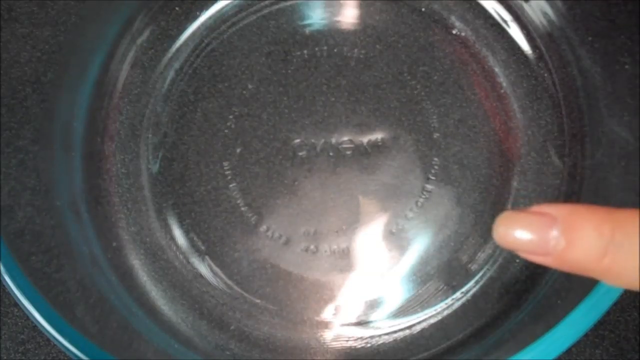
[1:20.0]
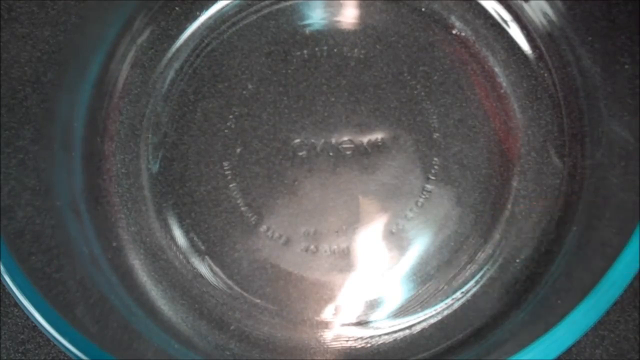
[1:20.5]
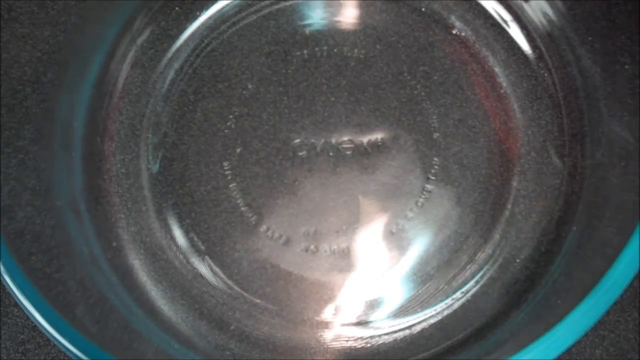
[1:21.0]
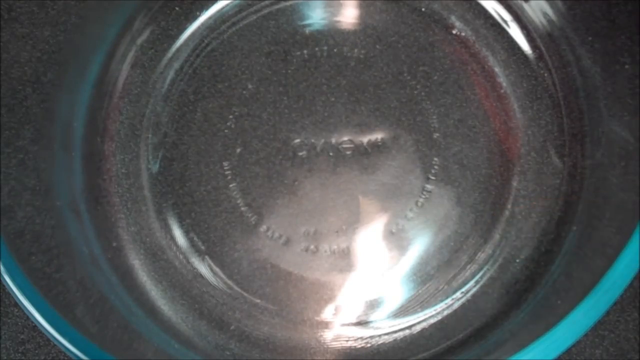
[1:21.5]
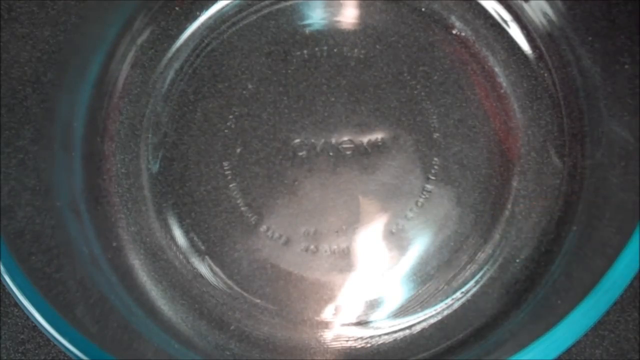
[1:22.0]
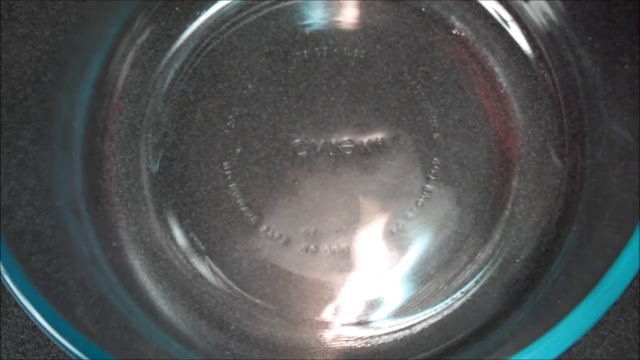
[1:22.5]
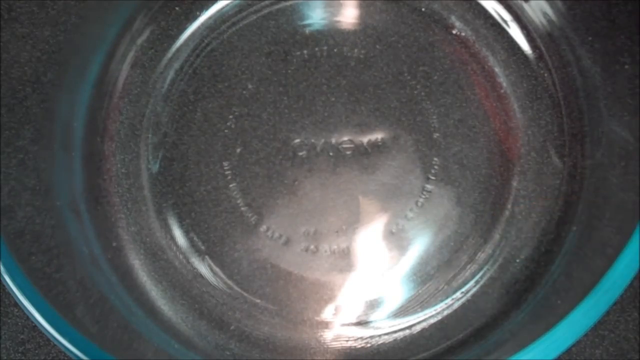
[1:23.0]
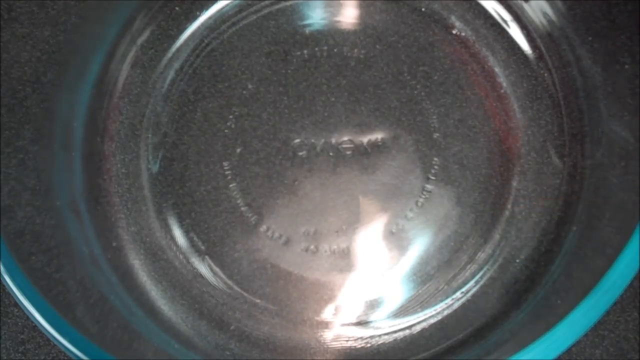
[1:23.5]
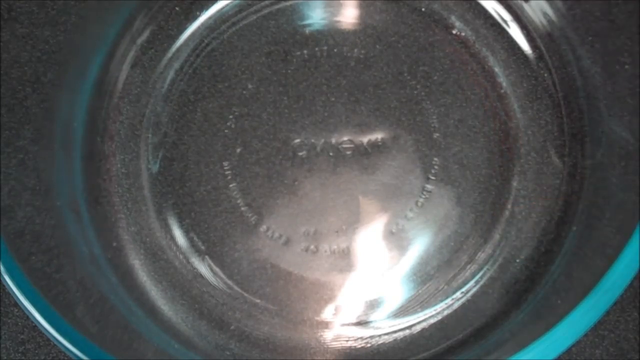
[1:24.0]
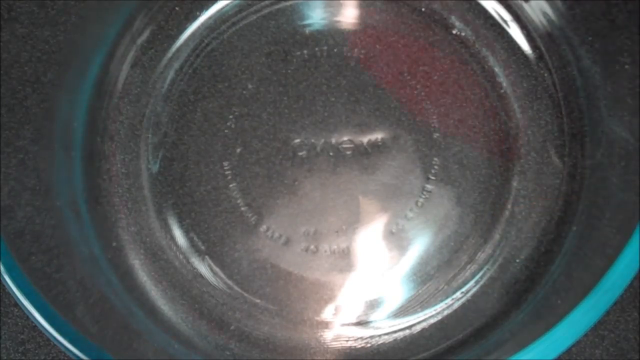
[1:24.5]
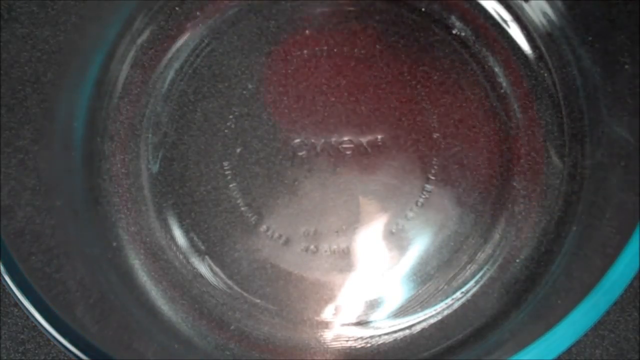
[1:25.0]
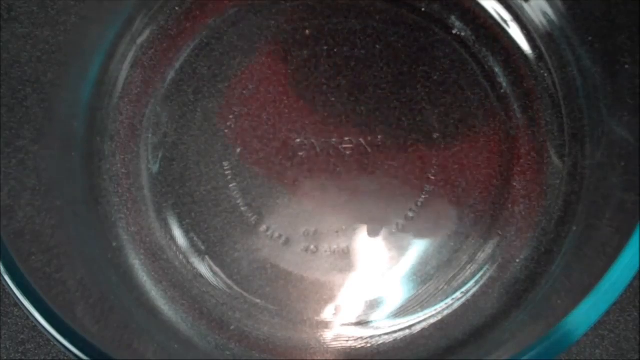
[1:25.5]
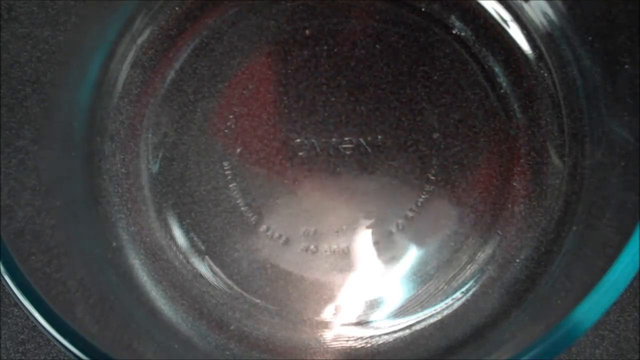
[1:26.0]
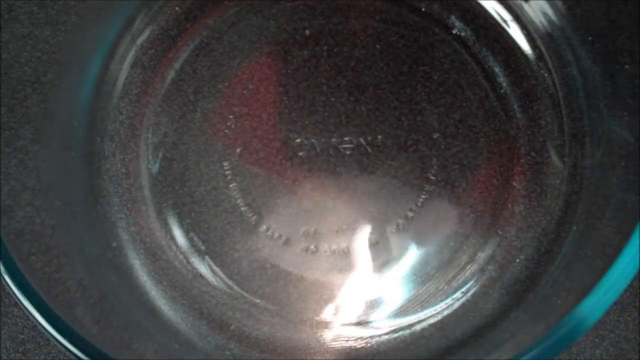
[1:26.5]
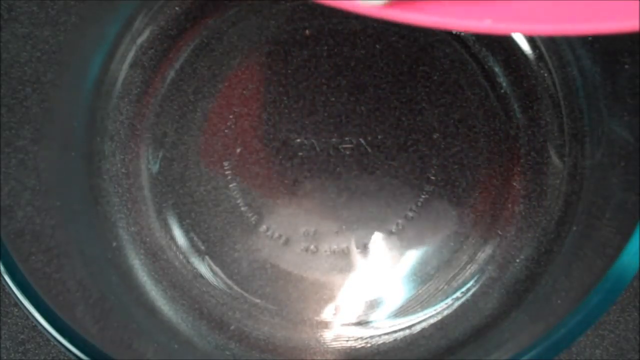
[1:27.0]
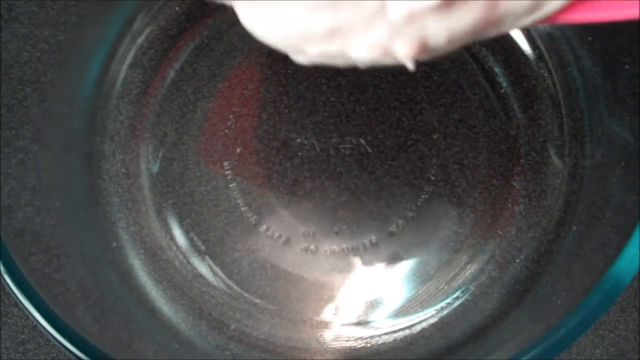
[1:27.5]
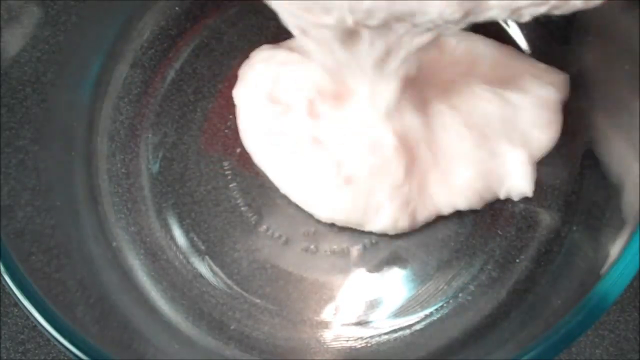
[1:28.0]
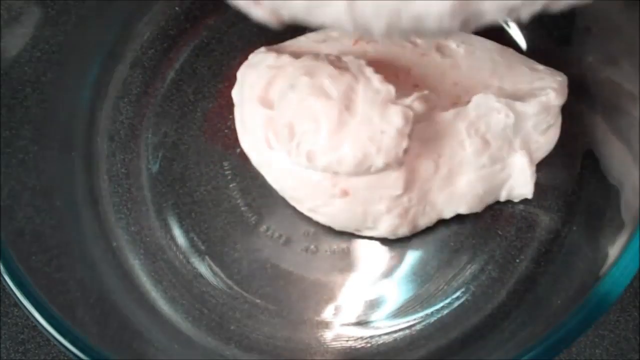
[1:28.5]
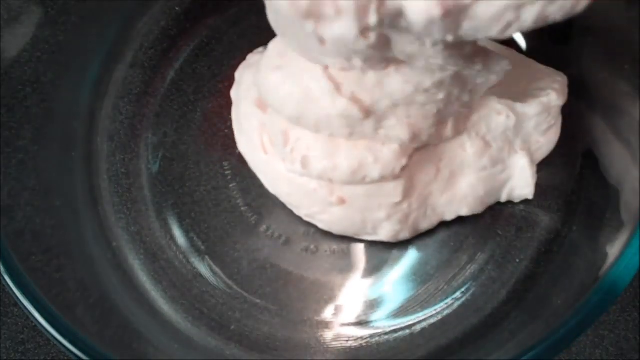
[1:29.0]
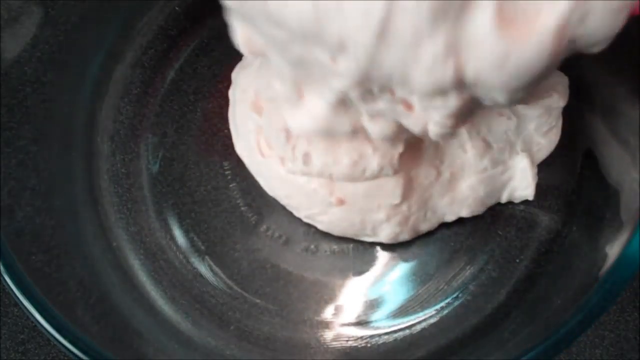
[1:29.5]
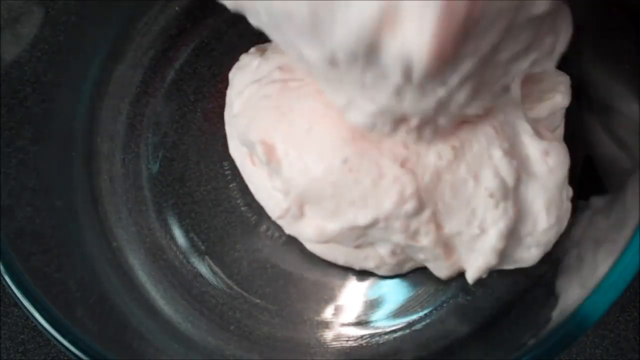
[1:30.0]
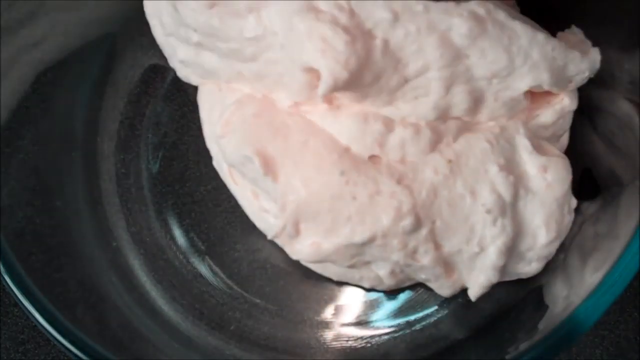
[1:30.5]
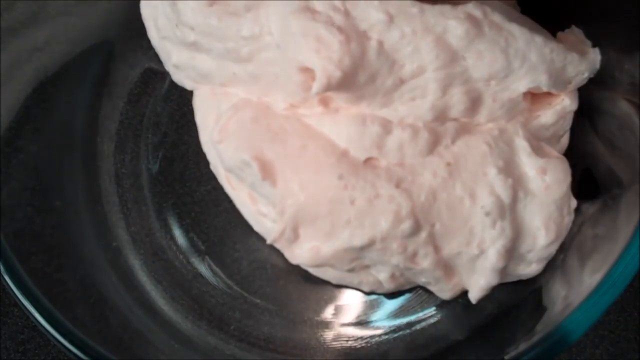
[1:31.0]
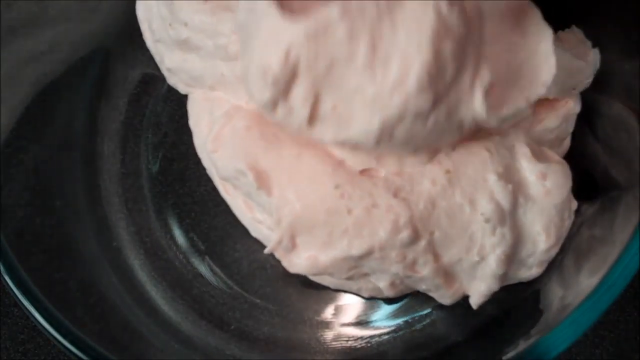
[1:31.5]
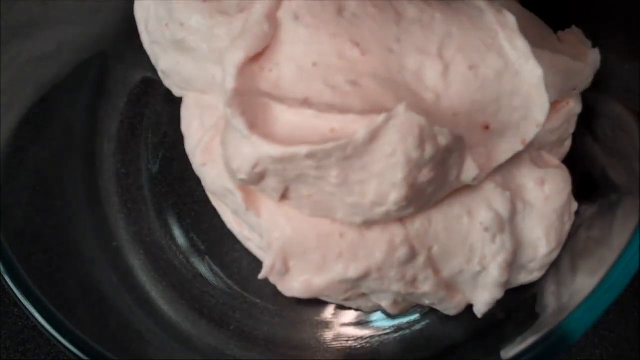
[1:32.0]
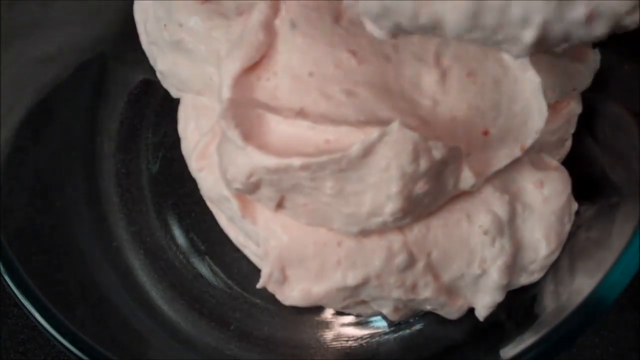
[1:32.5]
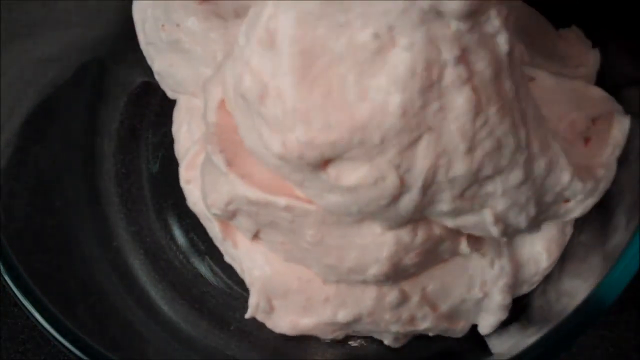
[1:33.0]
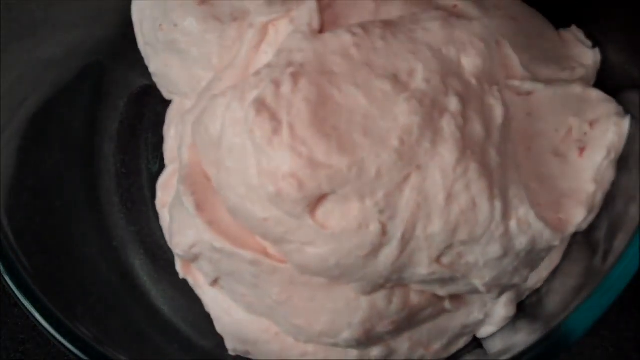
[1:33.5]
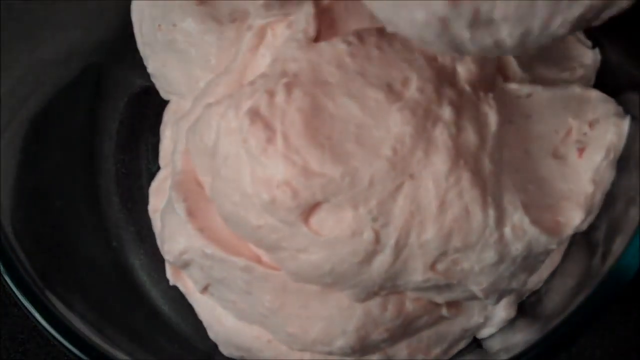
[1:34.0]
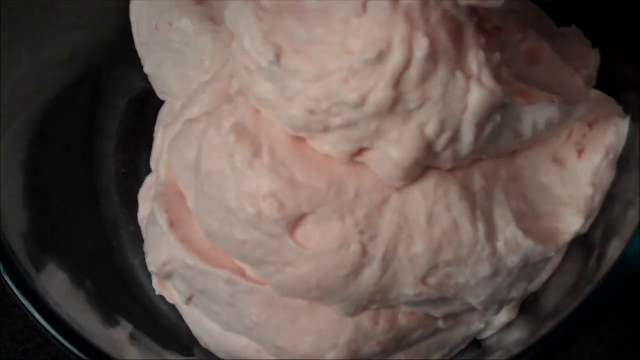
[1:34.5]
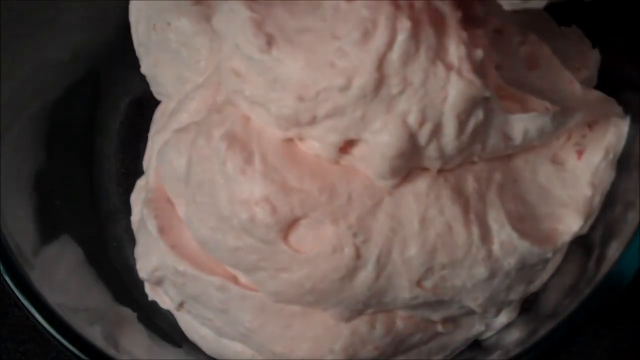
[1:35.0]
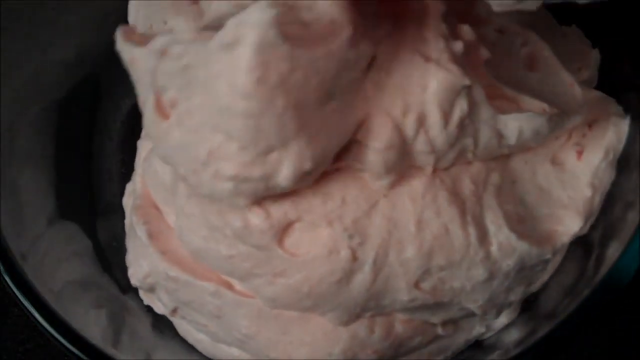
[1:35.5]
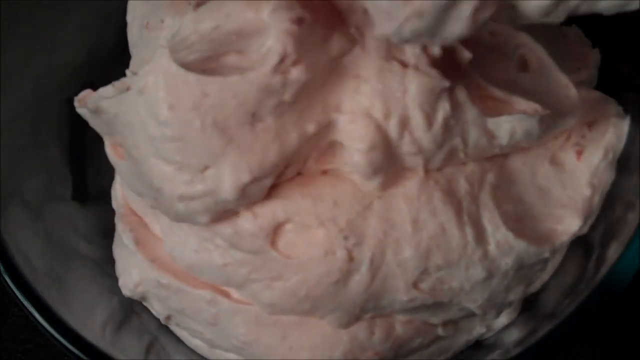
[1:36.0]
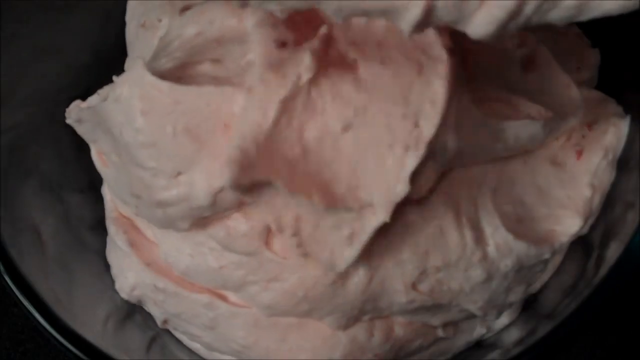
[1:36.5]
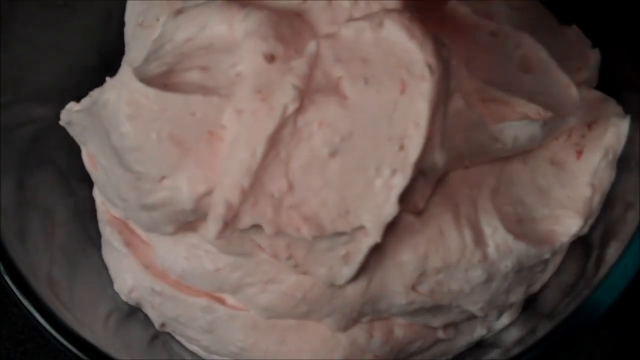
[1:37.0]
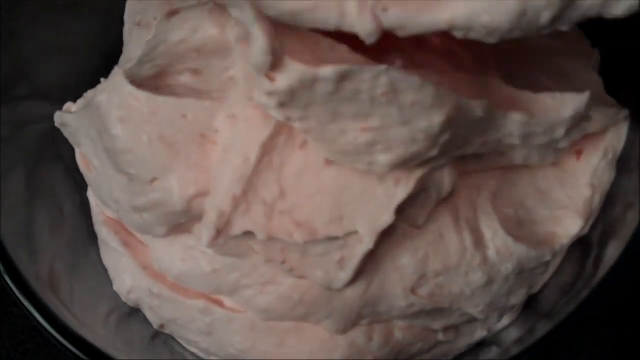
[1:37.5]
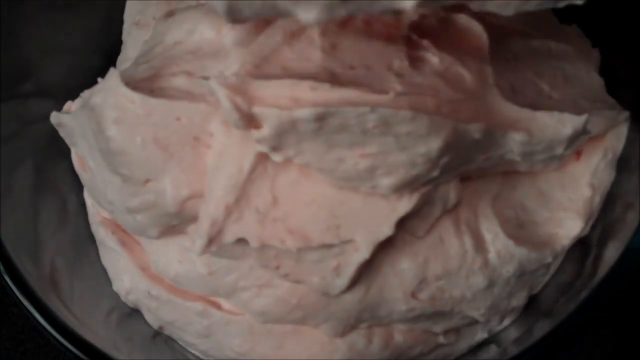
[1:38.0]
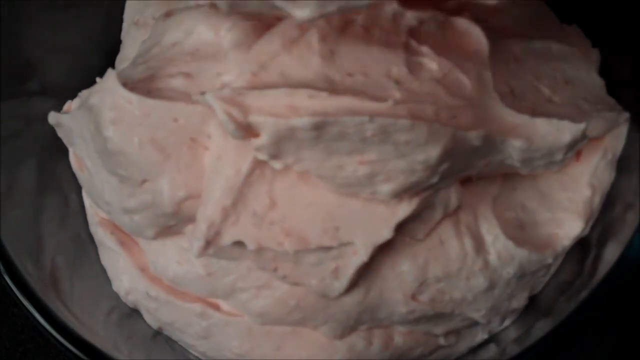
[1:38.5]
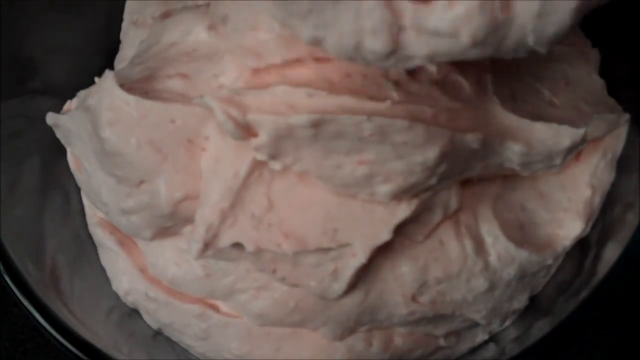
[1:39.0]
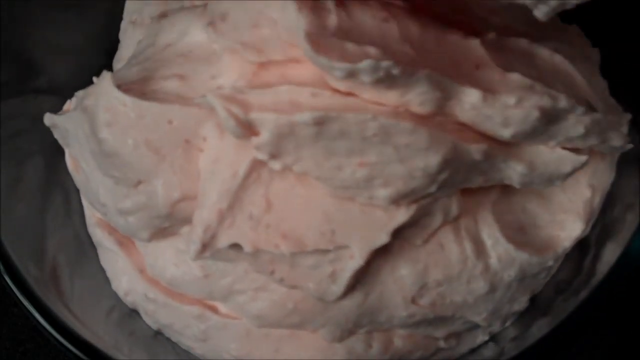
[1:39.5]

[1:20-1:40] The camera is focused closely on a glass bowl resting on a dark countertop. The countertop is visible through the glass, and the Pyrex name is stamped in the bottom of the bowl. Someone's finger appears in the lower right corner, resting on the side of the bowl and pointing to it as if to indicate what is going to happen in the bowl. Someone then pushes clumps of a creamy mixture out of a pink bowl that is slightly visible in the upper right-hand corner. It falls into the glass bowl, and the rest appears to be pushed out in clumps. The mixture is creamy and pale pink. The dollops land on top of each other until they begin to meld into the bottom of the bowl. An instrument is being used to push the dollops out, but it is not clearly visible on the screen.